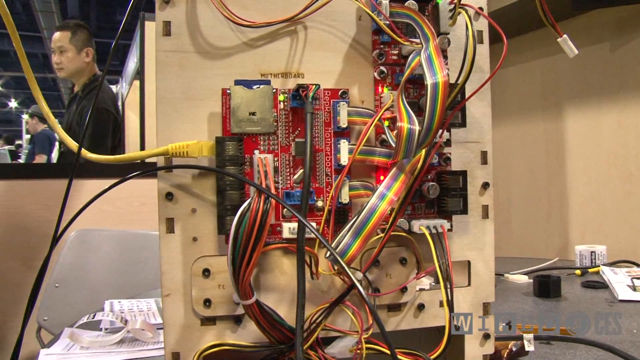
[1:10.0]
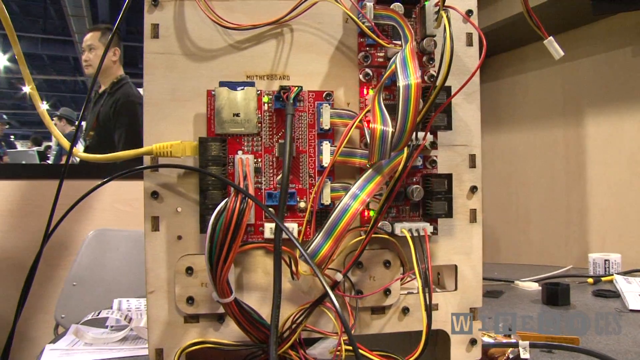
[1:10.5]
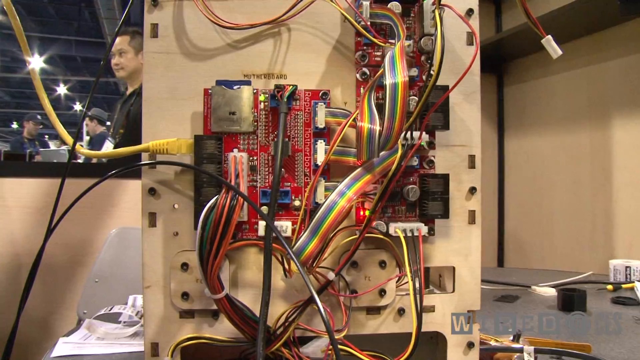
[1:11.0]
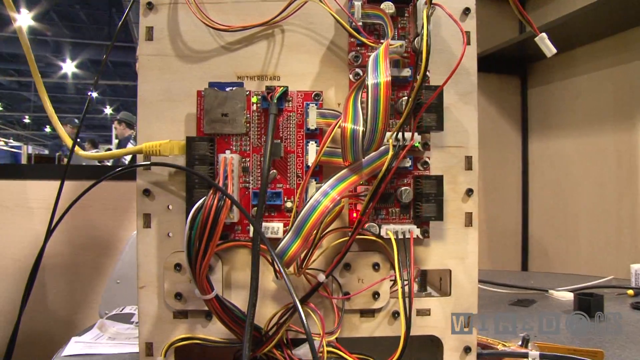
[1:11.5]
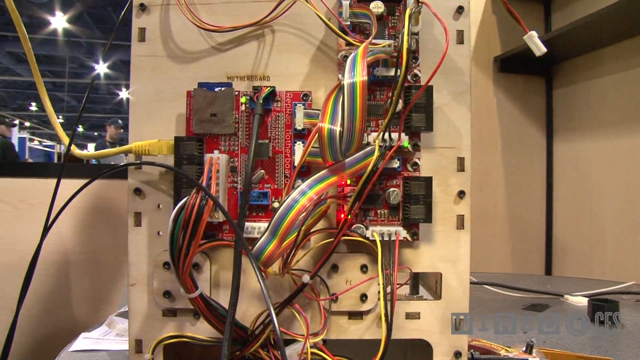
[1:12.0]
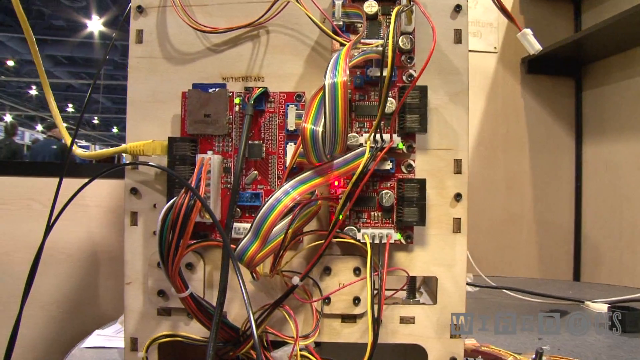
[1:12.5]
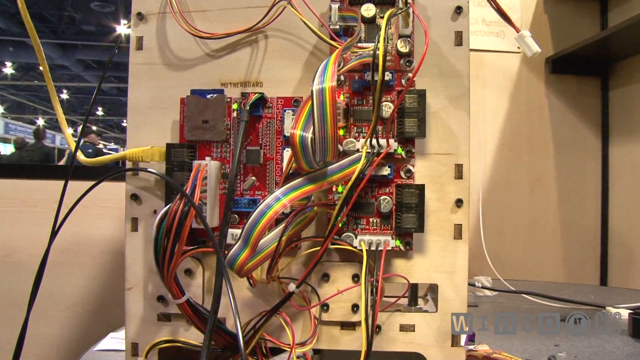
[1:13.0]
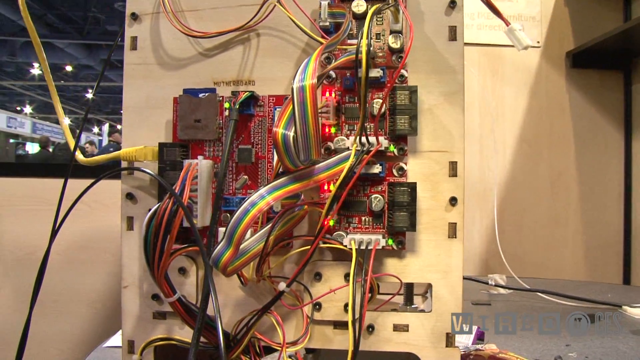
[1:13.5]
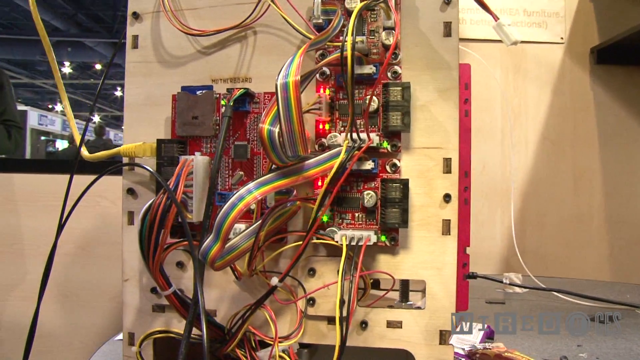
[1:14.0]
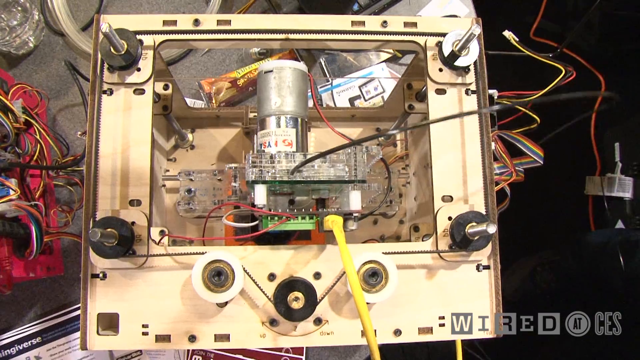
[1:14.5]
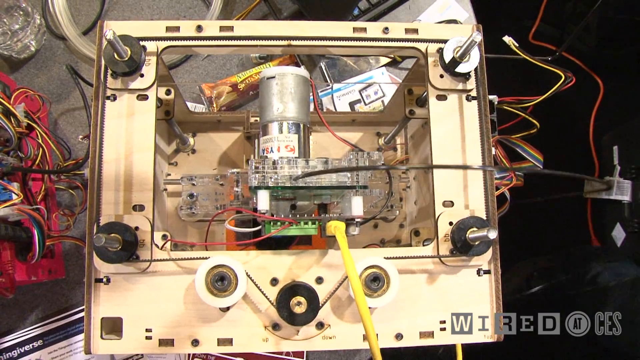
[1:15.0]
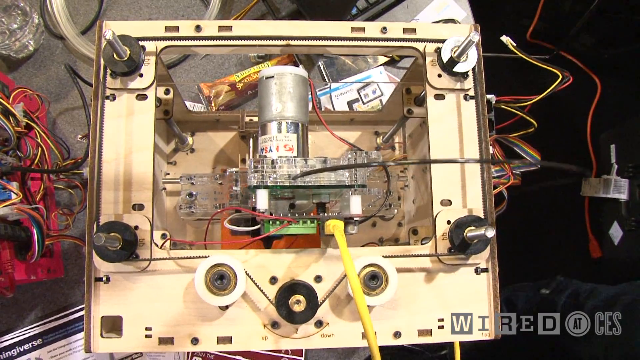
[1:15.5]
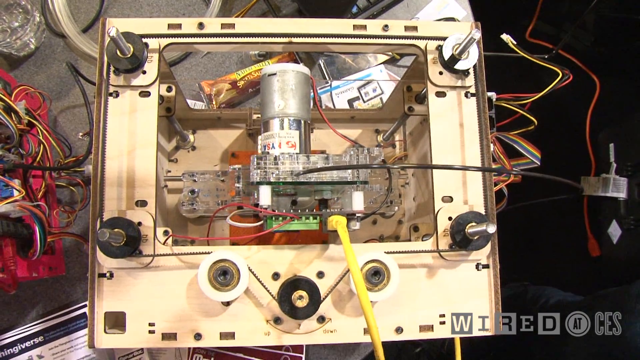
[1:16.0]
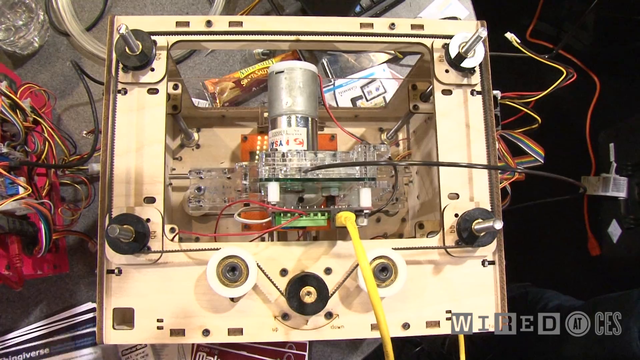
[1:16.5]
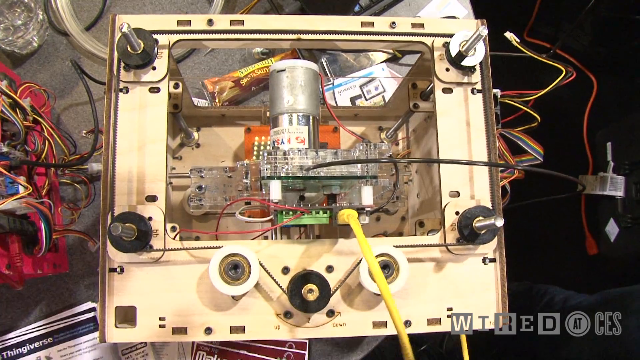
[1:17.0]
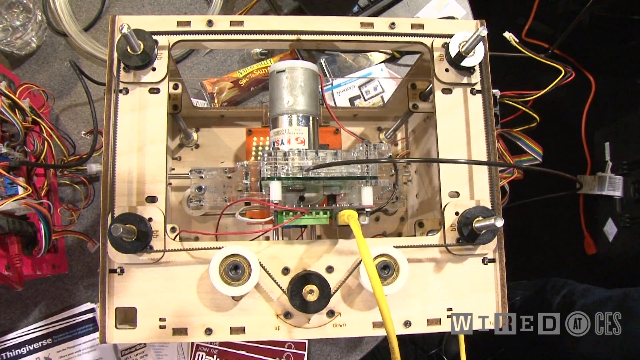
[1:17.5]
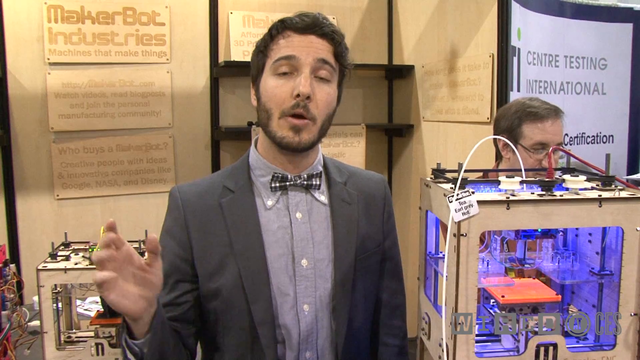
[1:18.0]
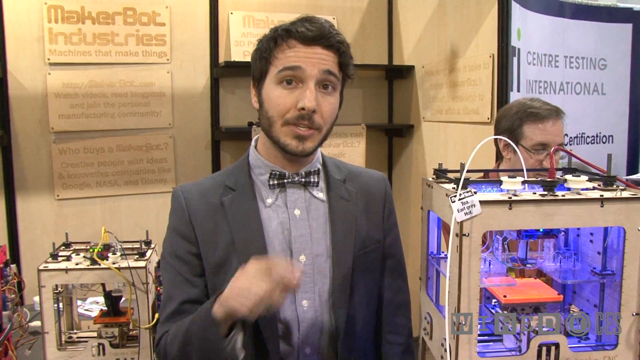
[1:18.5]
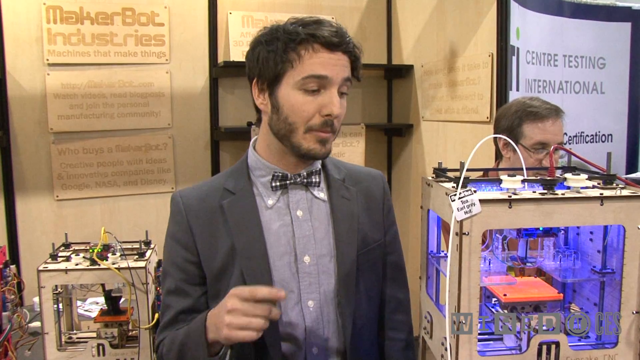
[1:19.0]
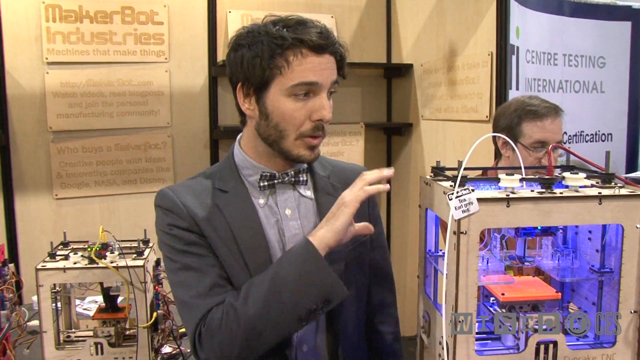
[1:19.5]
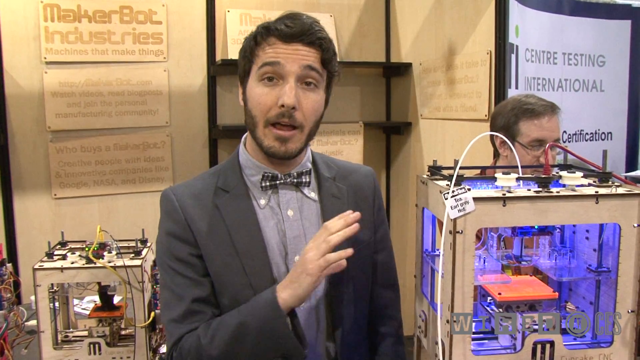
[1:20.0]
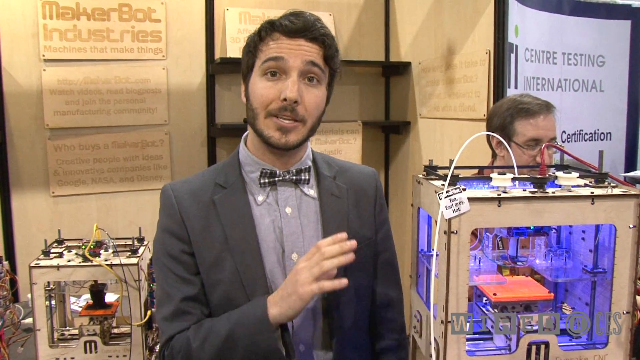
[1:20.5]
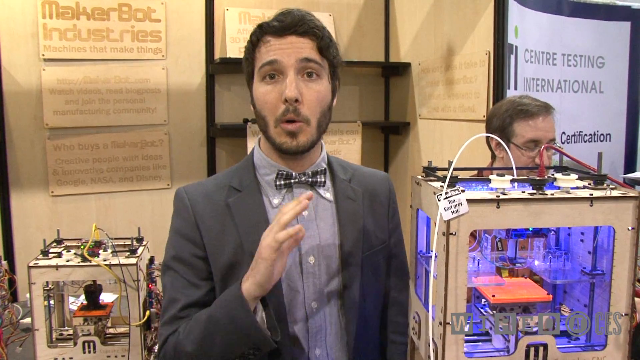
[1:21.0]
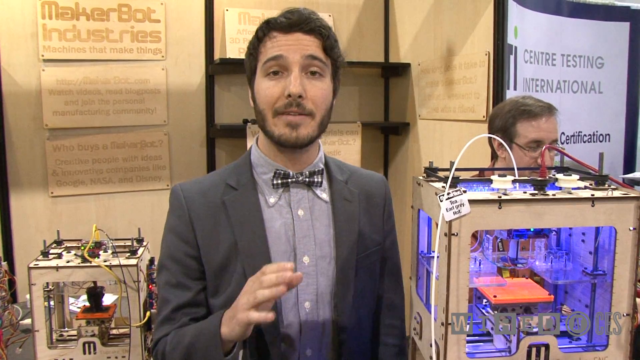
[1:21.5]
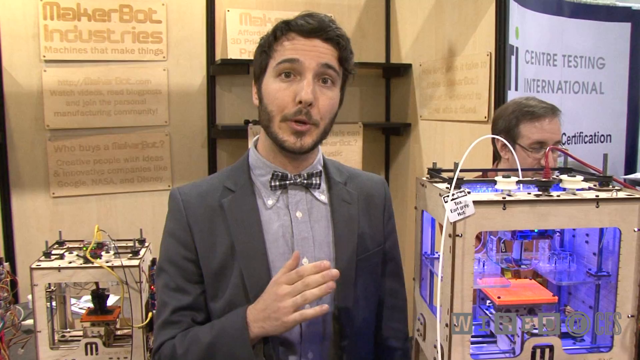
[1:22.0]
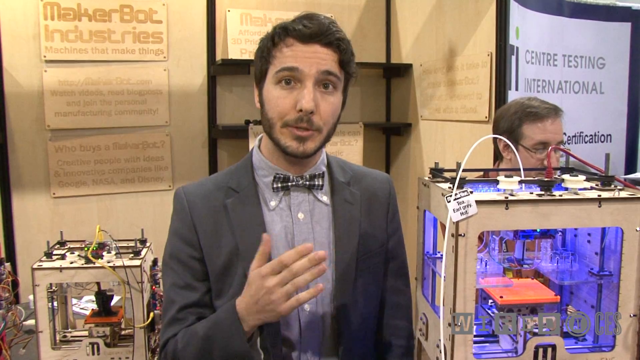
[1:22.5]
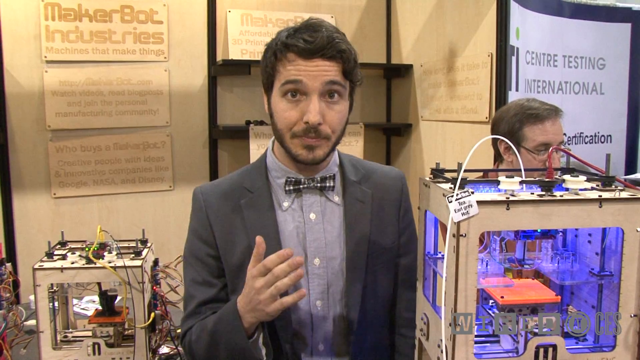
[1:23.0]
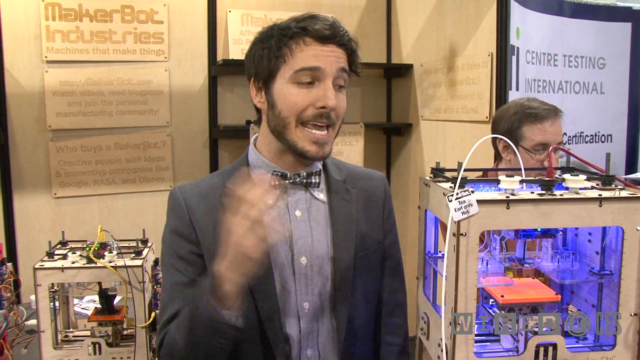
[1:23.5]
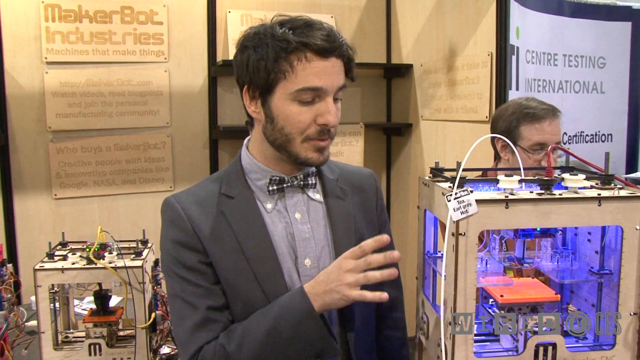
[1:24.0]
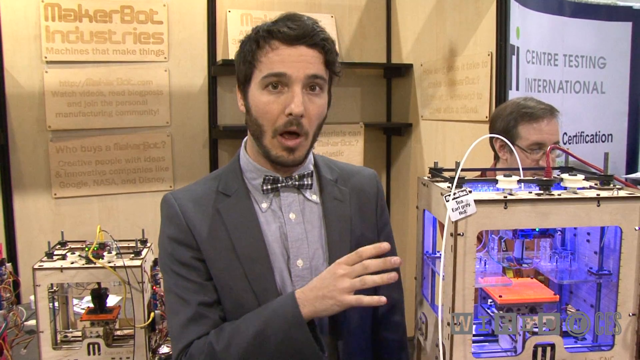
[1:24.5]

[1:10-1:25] The view switches to the outside of the 3D printer, giving a 360 view of it. The box looks about the size of a regular cardboard movie box, and attached to it are what look like hundreds of wires in different colors, not tangled but running to many different places, almost like a human body. There are pulleys, lifts and many other elements. At least four lights blink and flash on the back of it. The video then switches back to the speaker, who appears to be explaining how it works as he points towards it.